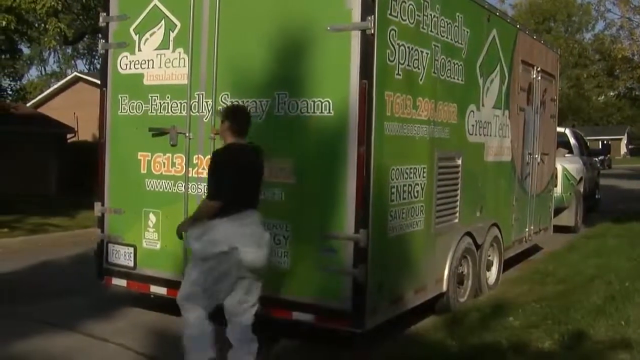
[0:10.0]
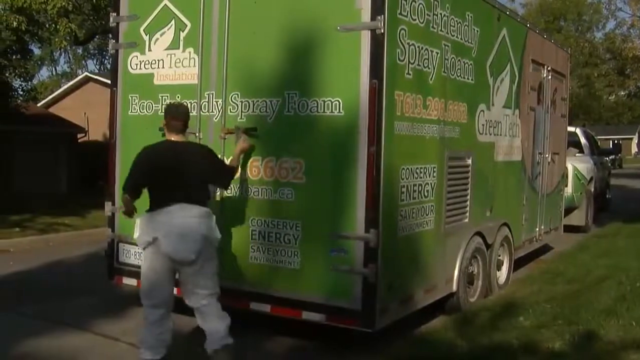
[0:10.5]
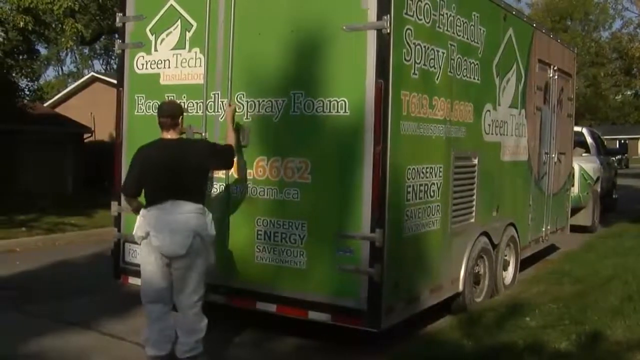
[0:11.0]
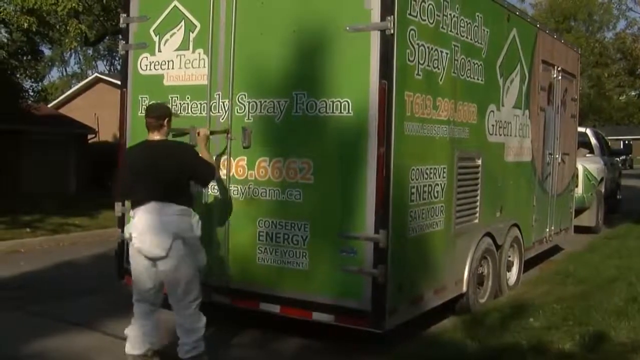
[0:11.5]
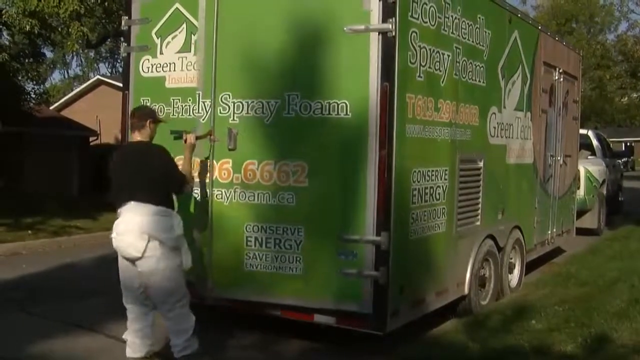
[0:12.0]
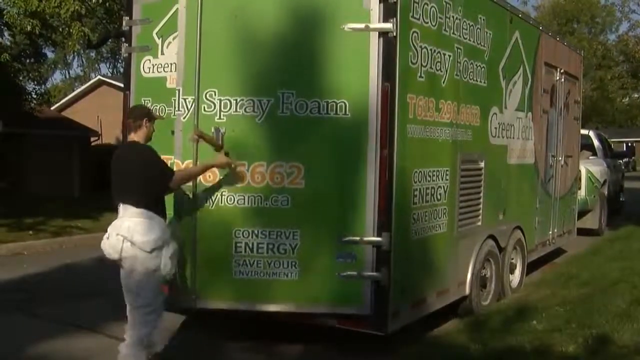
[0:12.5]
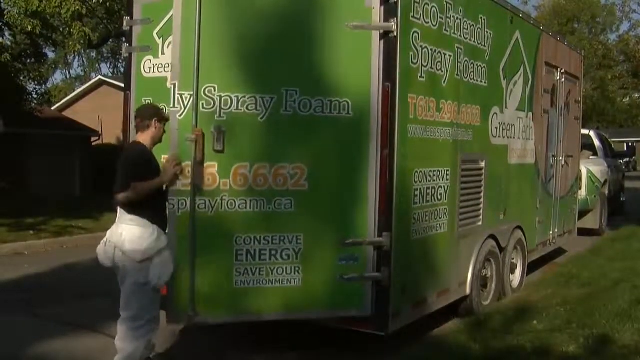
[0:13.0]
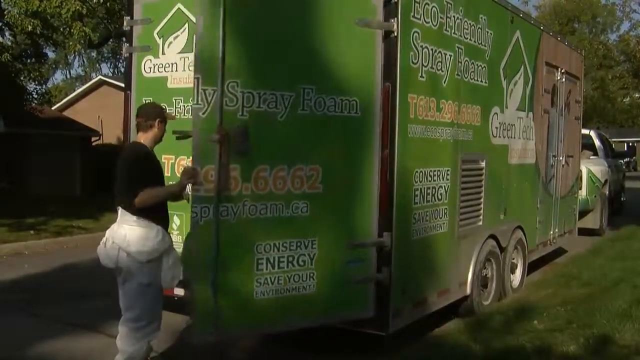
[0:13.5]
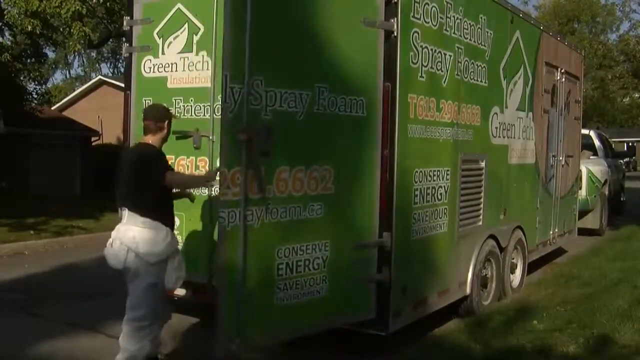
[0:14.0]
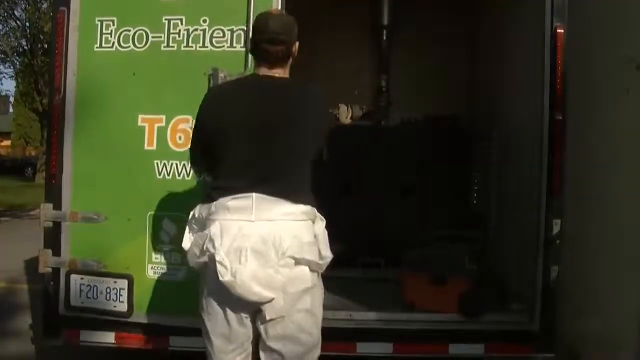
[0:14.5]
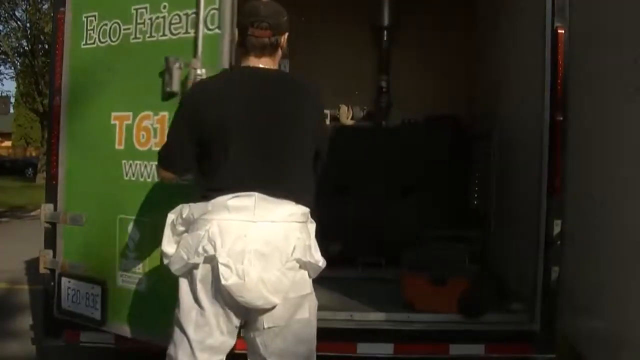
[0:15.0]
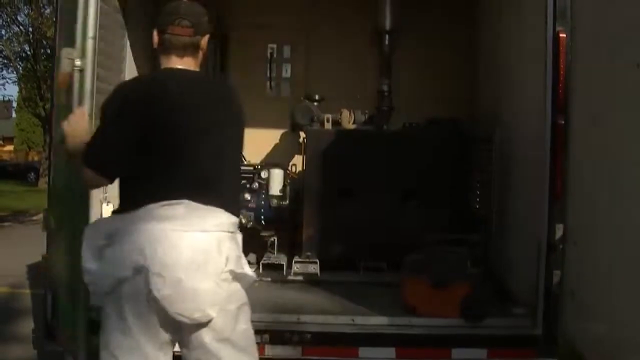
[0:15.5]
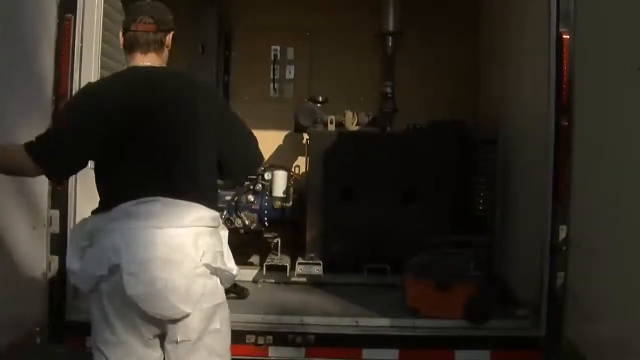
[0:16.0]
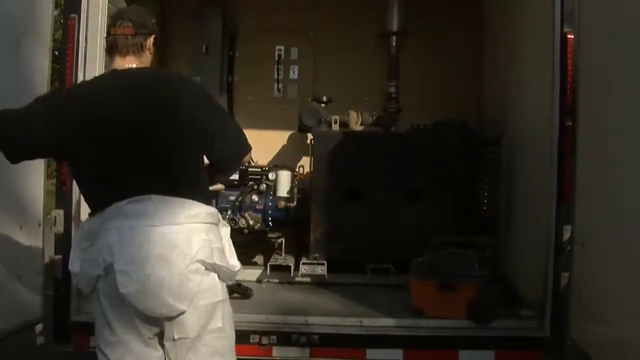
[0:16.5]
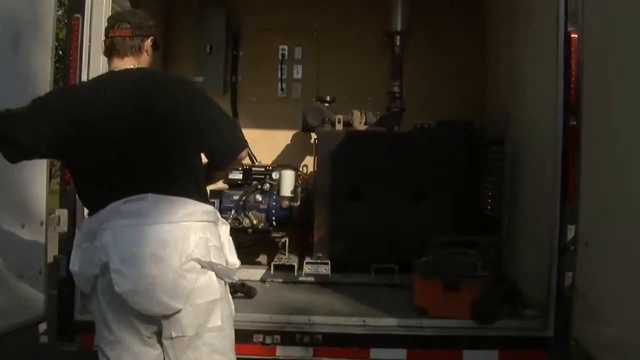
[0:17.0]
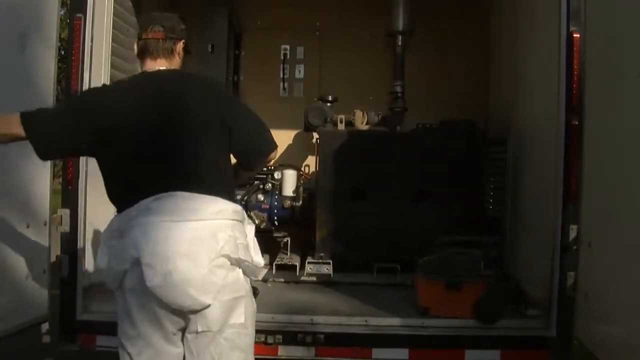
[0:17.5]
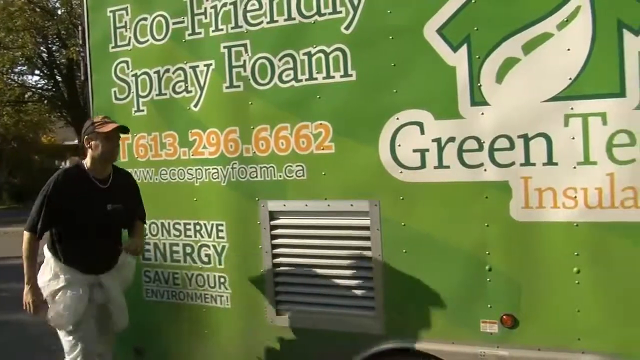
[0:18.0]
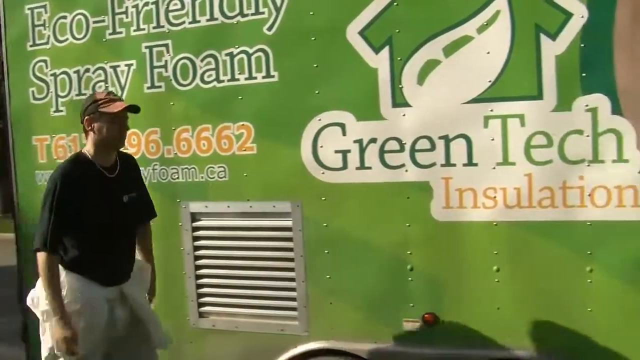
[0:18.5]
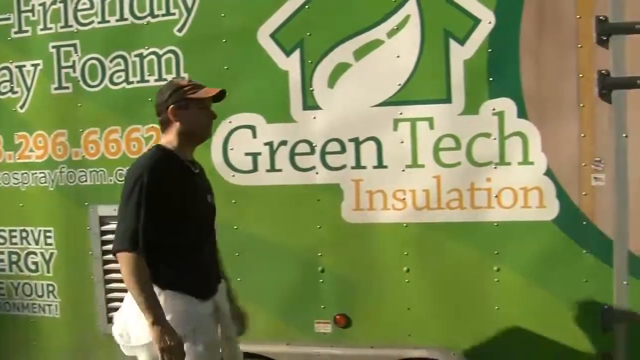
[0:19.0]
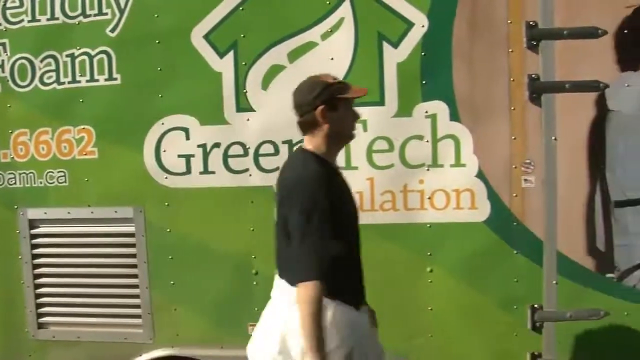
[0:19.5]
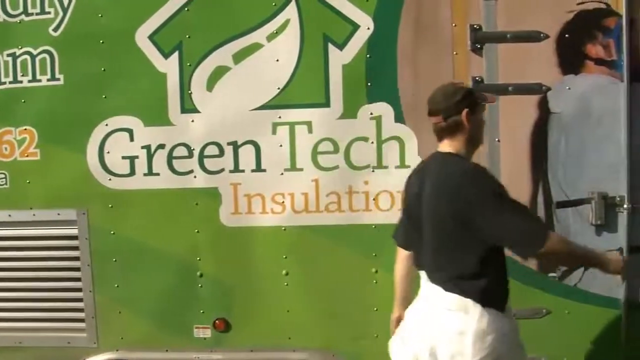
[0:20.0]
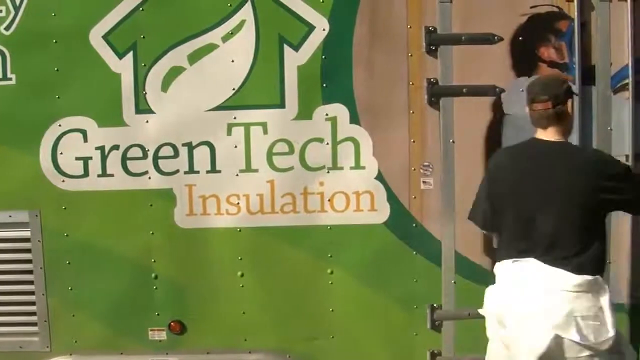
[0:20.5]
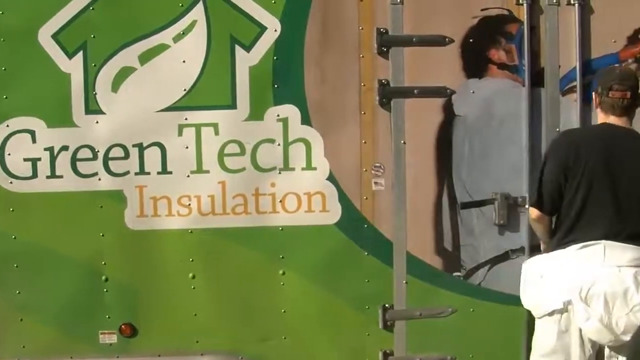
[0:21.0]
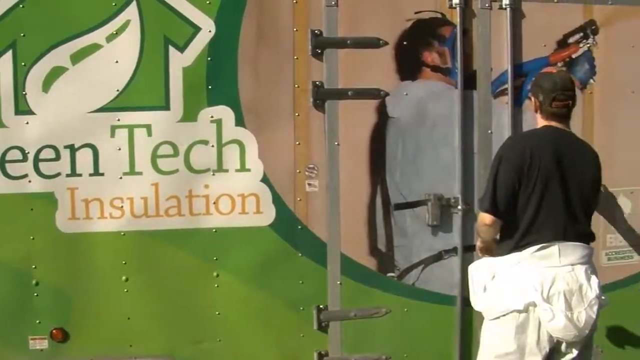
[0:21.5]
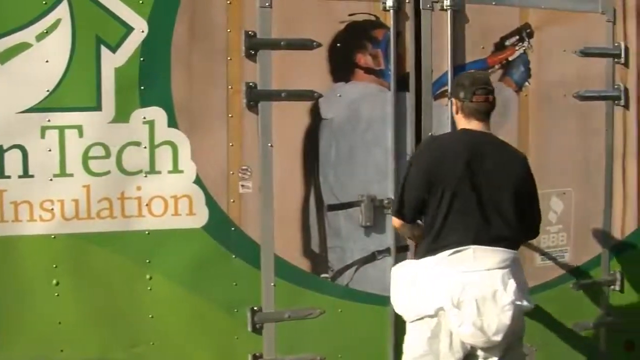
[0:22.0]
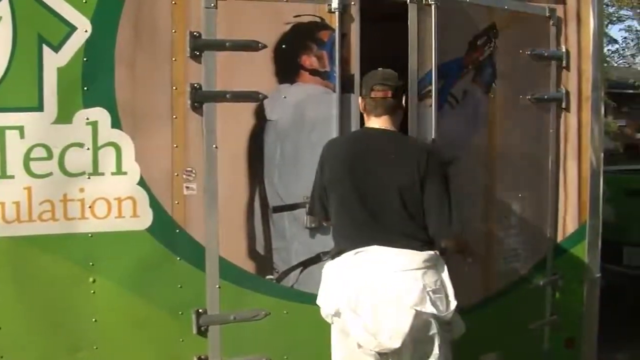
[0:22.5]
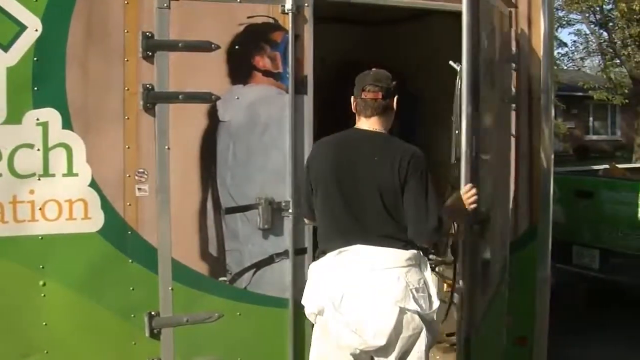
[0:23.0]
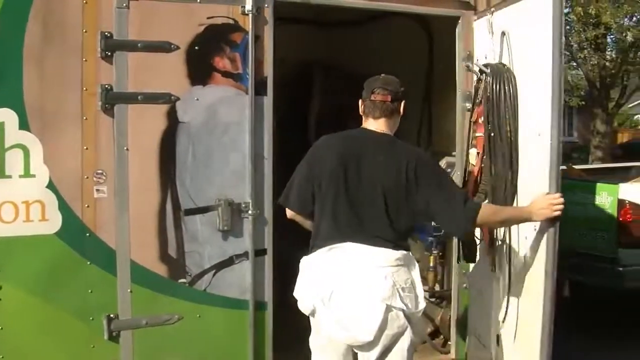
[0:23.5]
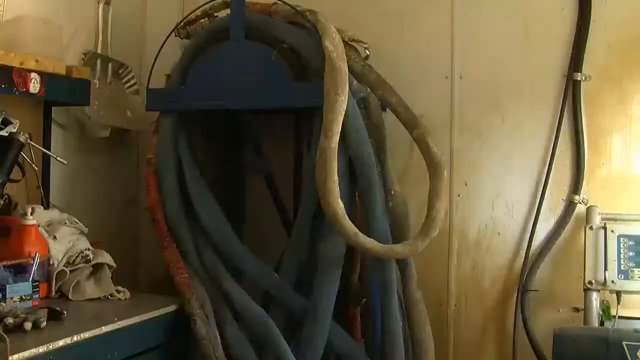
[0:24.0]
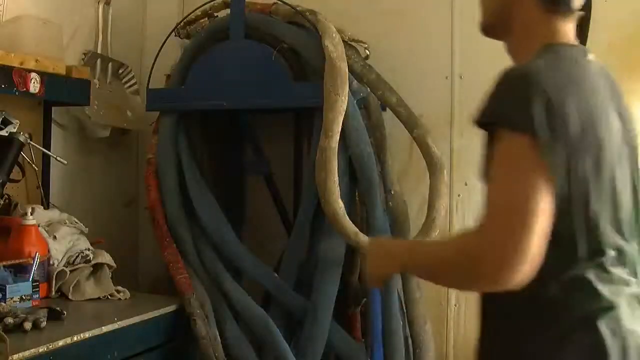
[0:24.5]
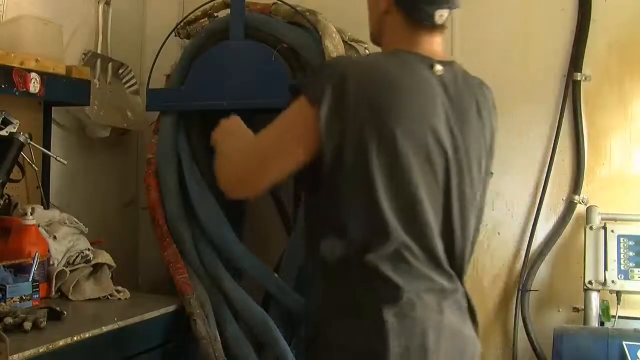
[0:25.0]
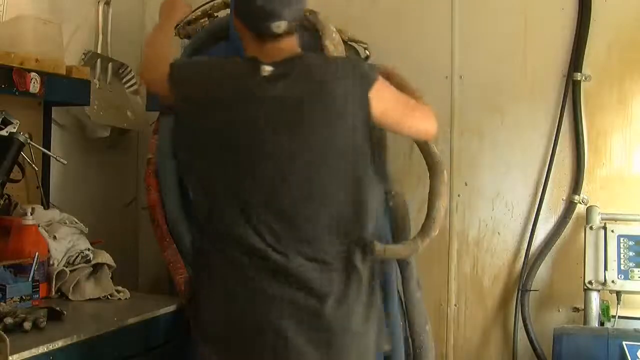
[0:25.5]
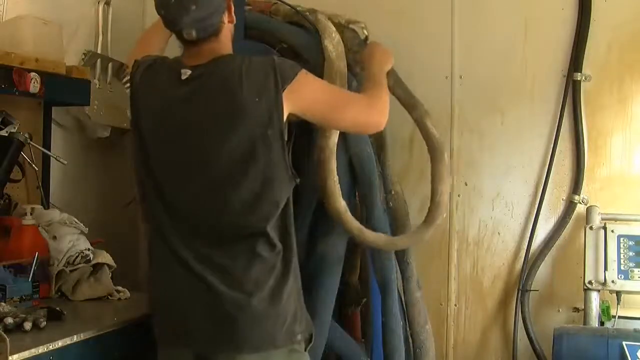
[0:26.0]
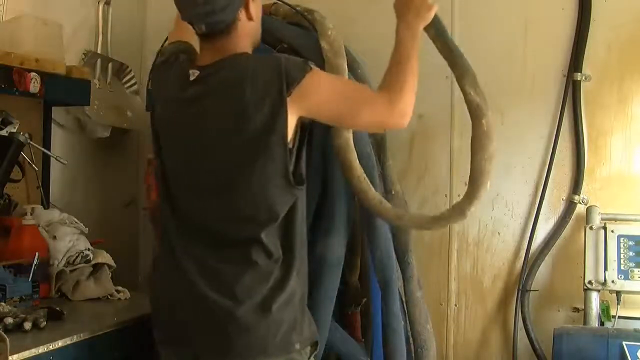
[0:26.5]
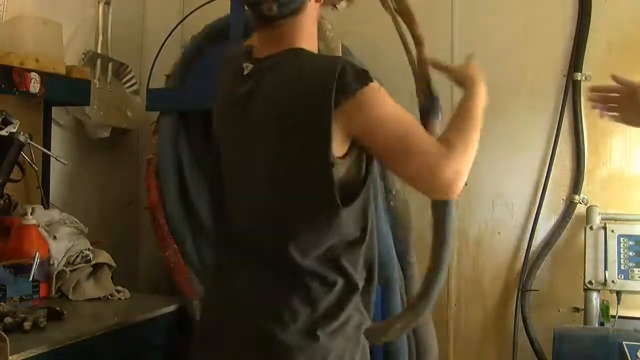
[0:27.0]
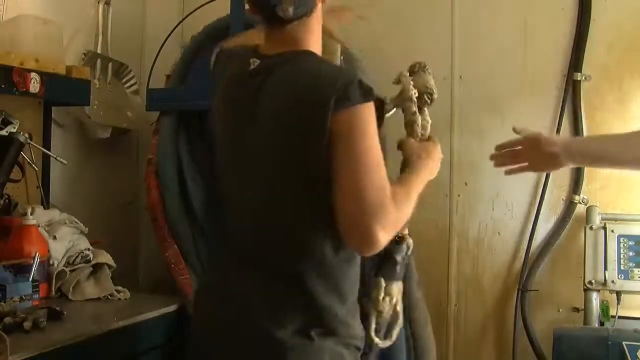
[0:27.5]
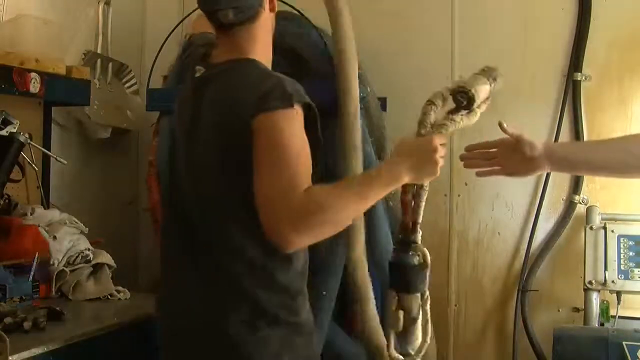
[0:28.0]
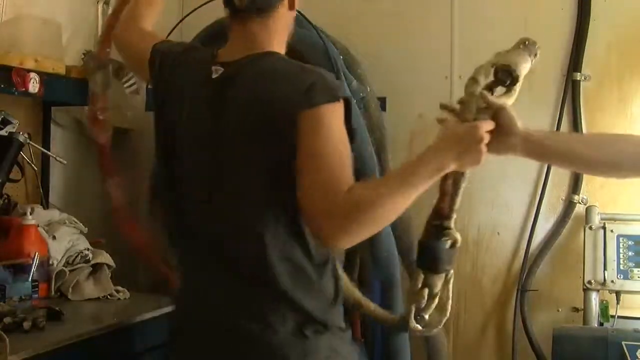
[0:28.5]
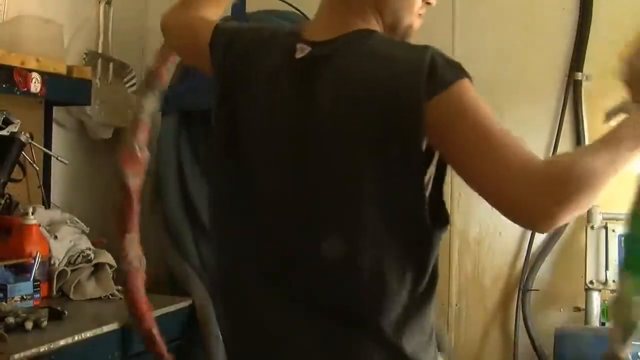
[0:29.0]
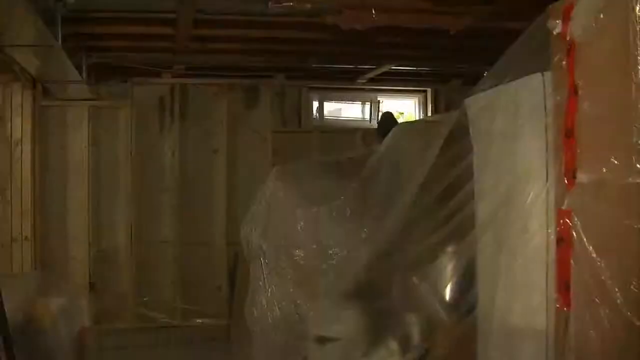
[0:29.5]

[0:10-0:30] The green trailer reads "green tech insulation, eco-friendly spray foam" and "conserve energy, save your environment," along with a phone number. It appears to have doors on the side as well as on the back. The man, whose jumpsuit is pulled halfway down, walks all the way around to the back and opens it, revealing lots of tools and supplies, including a large black box, some piping and machinery. He then opens the side door, which holds lots of hoses and other tools, chemicals and things. He takes some rope and a hose off, and apparently hands the hose and ropes to another person, whose hands are visible, as he takes the hook out of the trailer. The scene then appears to move inside a house that looks like it might be under construction; it is white inside, with some tarps.